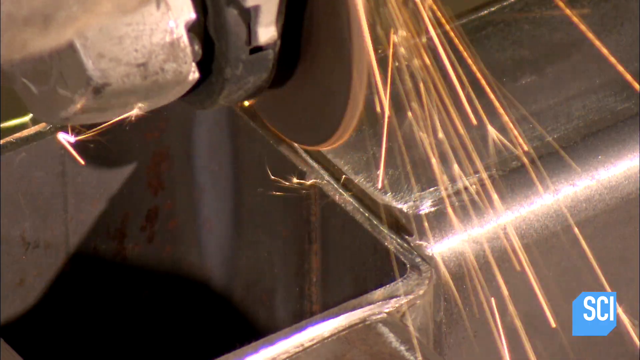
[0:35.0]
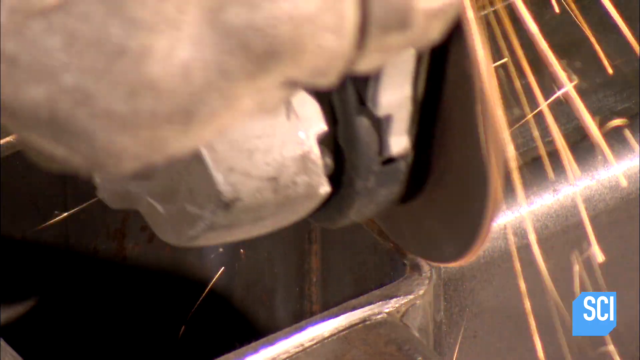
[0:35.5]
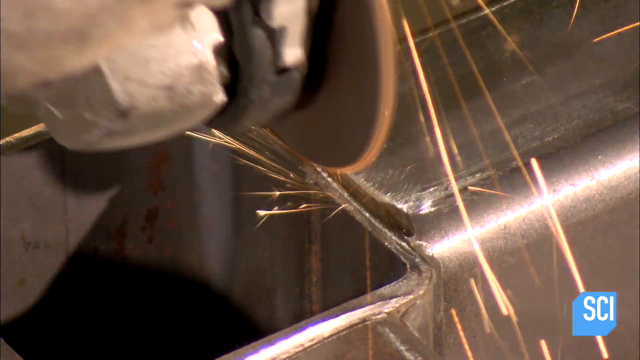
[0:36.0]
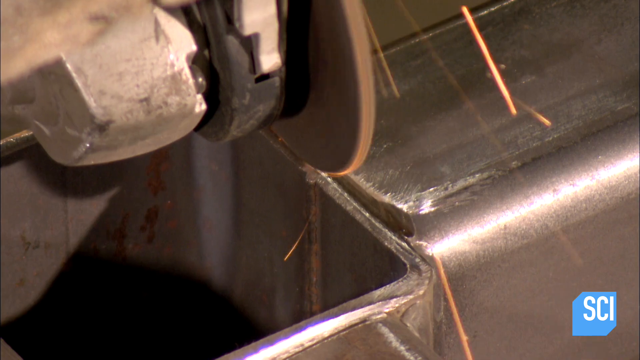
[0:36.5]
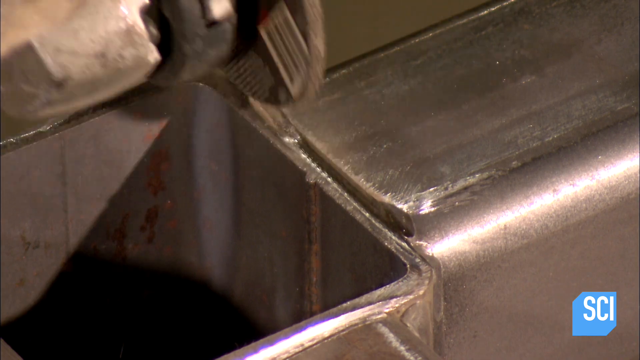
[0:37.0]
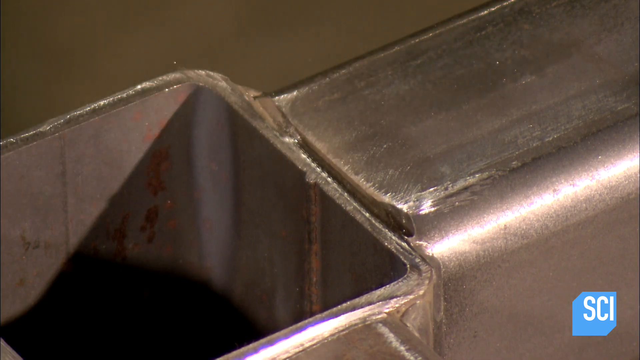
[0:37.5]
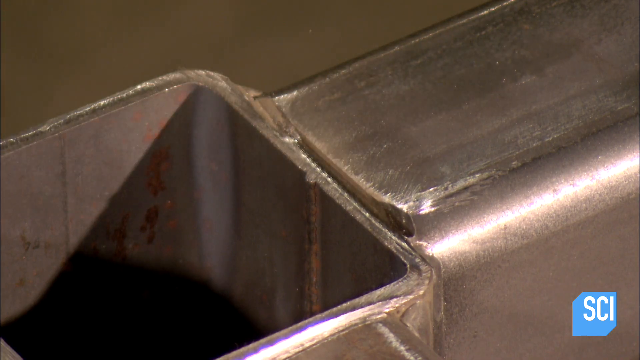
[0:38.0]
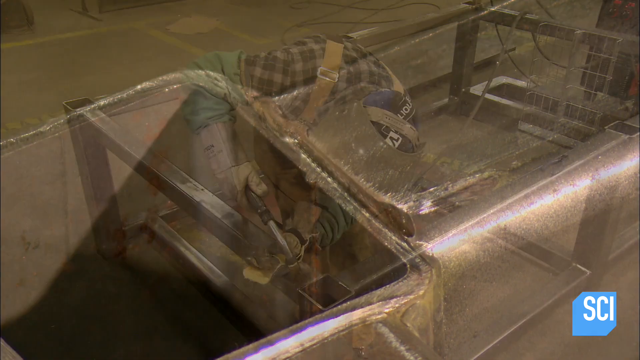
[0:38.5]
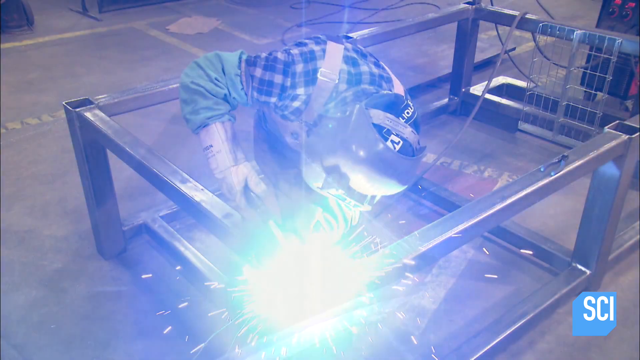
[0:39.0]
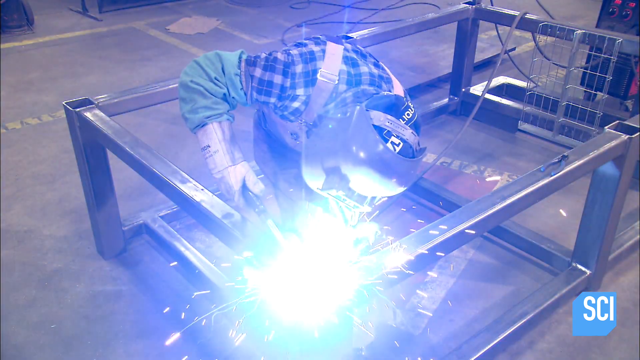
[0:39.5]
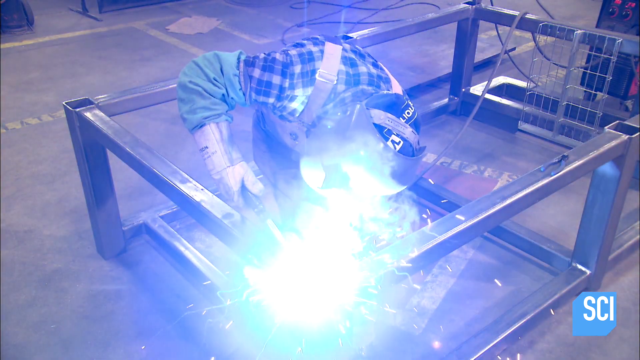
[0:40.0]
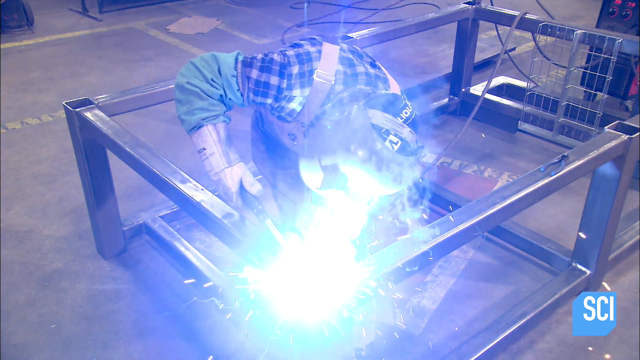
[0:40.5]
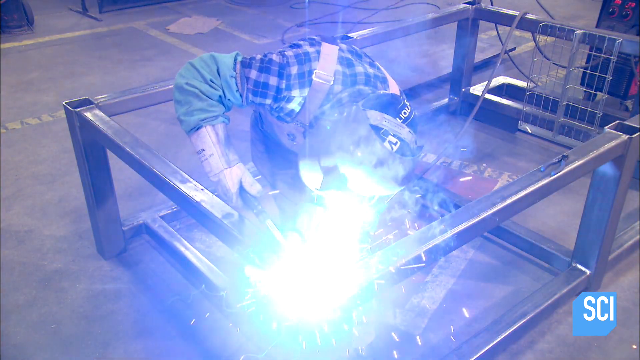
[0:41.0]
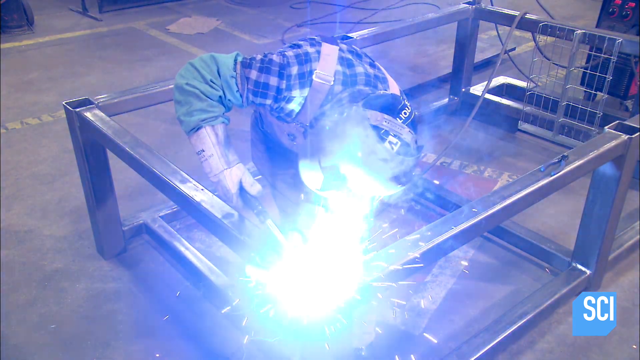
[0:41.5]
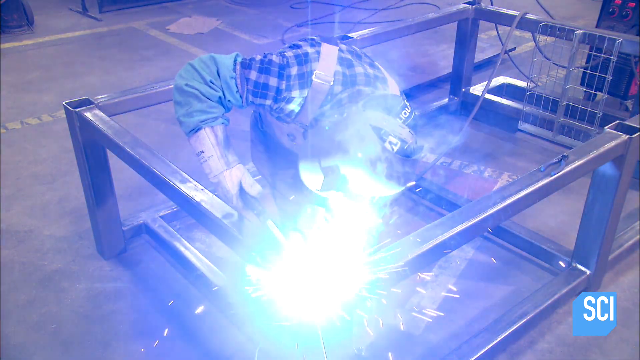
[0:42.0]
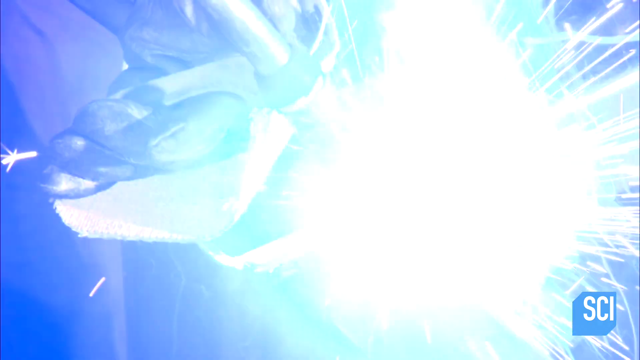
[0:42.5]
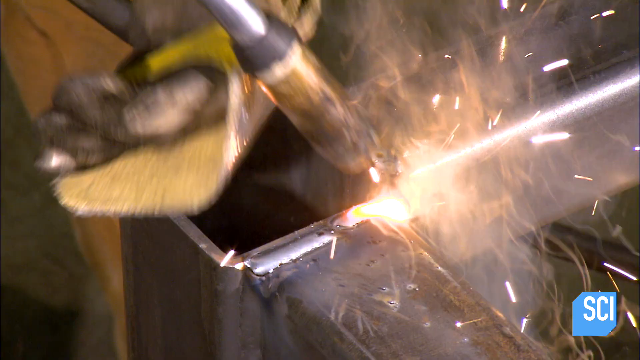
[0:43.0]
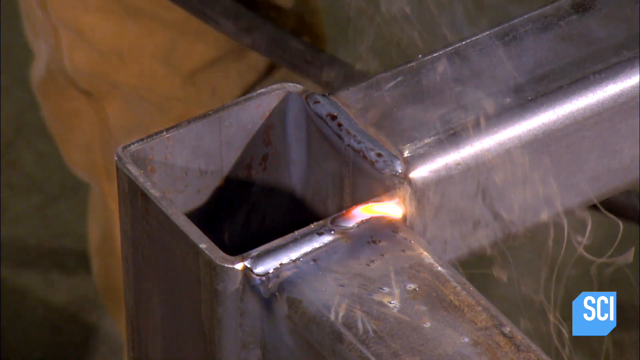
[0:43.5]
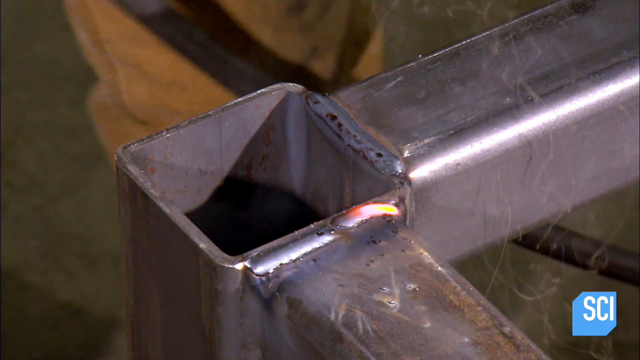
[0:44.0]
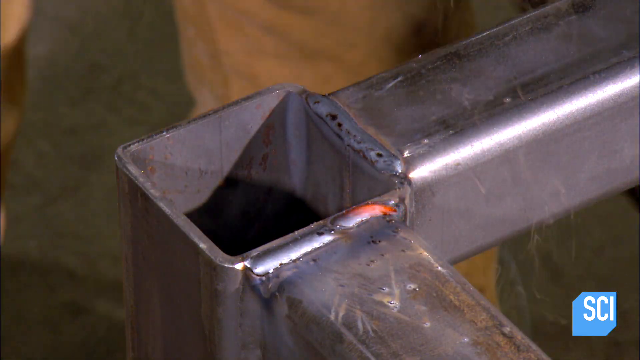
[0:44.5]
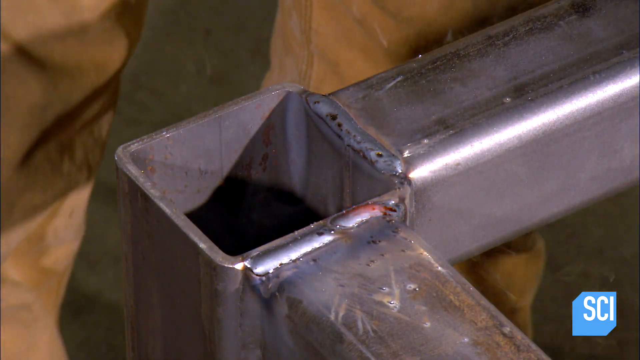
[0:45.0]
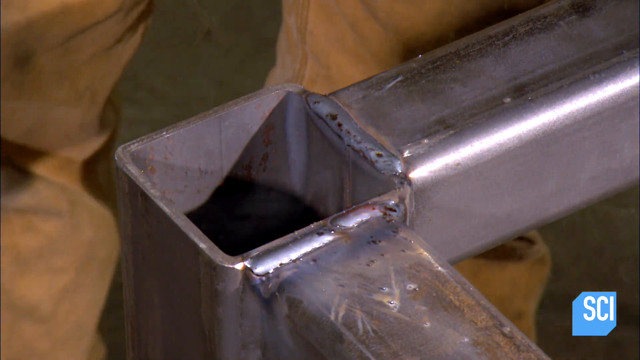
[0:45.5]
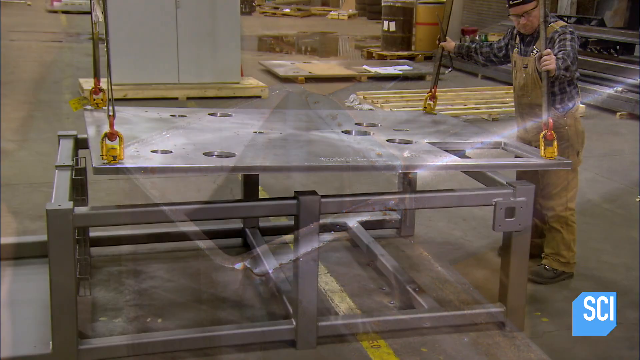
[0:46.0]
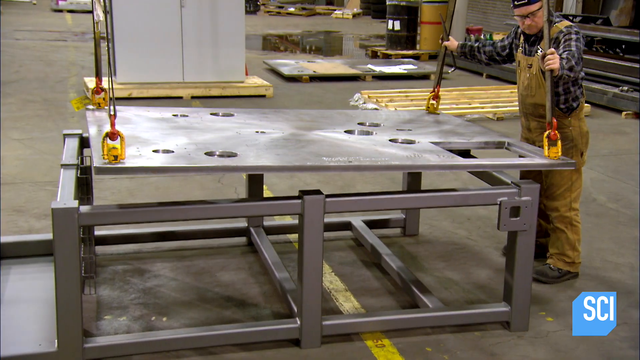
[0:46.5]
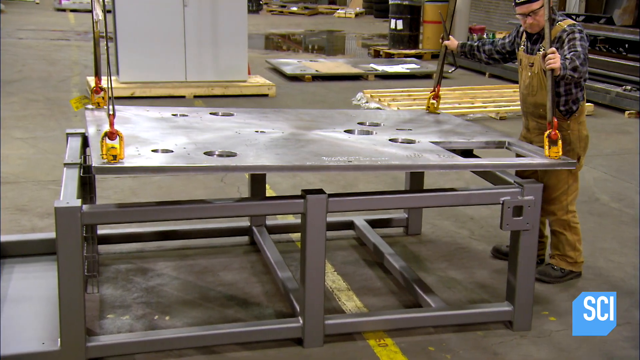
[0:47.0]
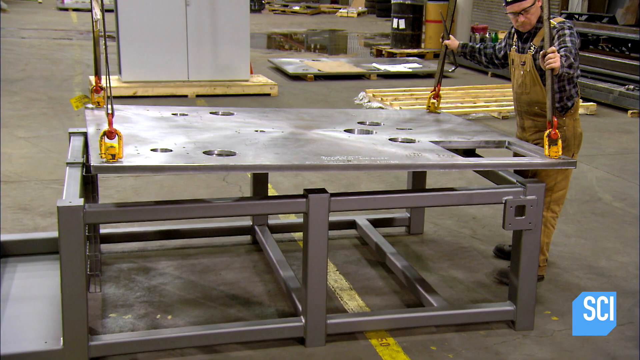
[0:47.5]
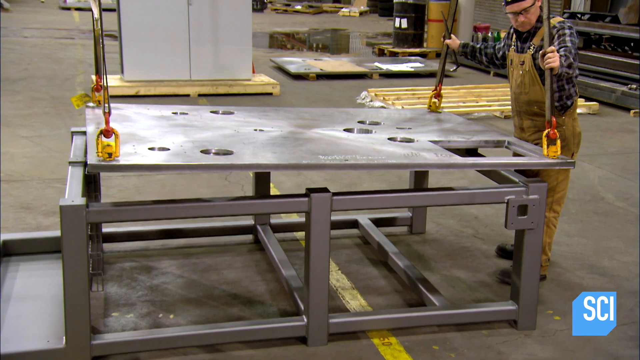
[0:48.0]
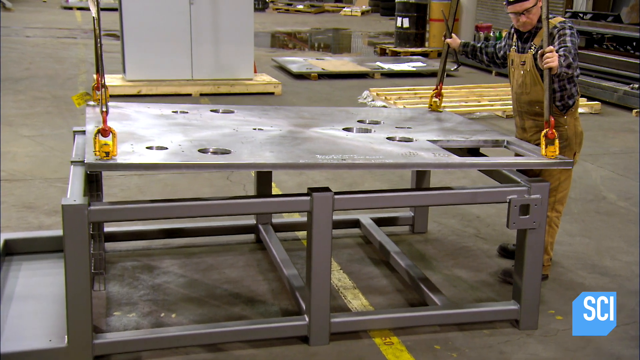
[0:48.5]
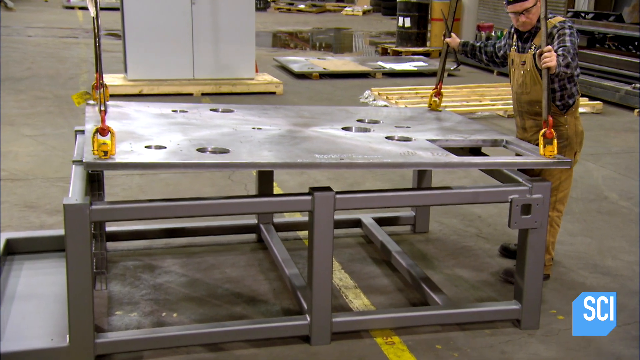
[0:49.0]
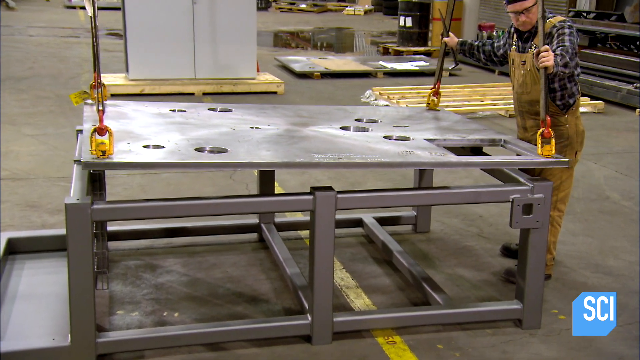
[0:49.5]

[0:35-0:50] The same worker does more work constructing the metal piece he is putting together. He uses a grinder to grind the edges of his weld, then is shown inside the square metal frame, bent over and welding a piece onto its corner. He wears the same brown overalls, welder's gloves, safety goggles, and a hat that looks like it is turned backwards. A large flat piece of metal is then hoisted over the top of the metal frame, and the man guides it toward the frame; it looks like it will be set down on top. All of this takes place in a warehouse on a concrete floor that looks like a workplace.